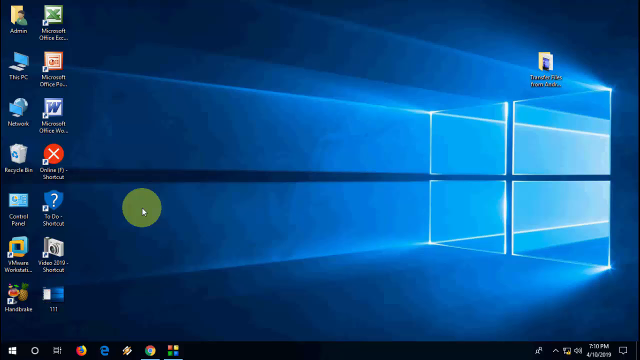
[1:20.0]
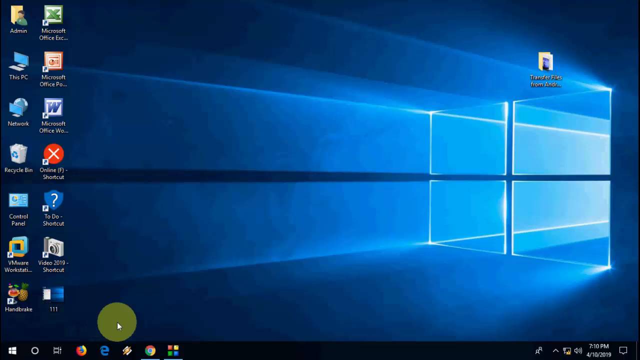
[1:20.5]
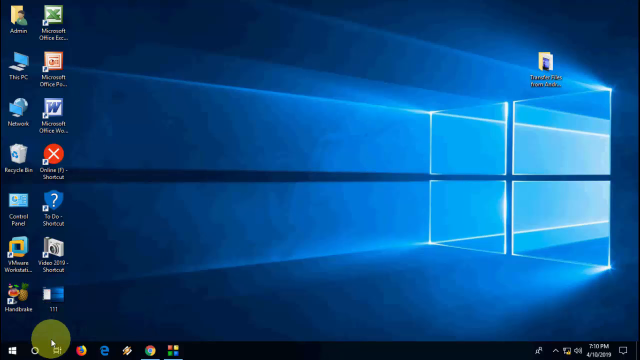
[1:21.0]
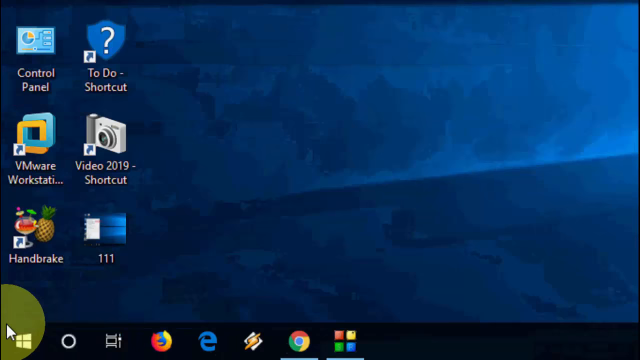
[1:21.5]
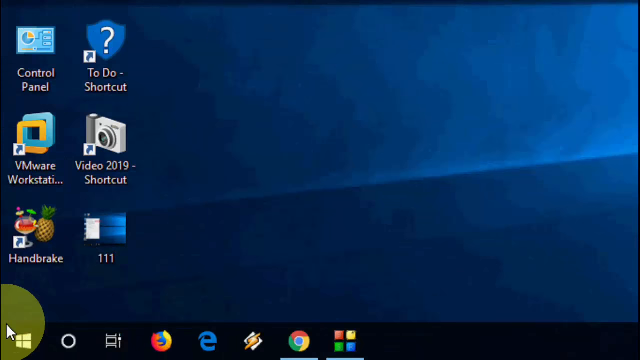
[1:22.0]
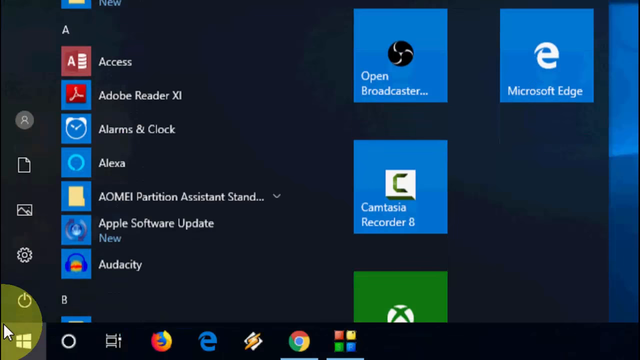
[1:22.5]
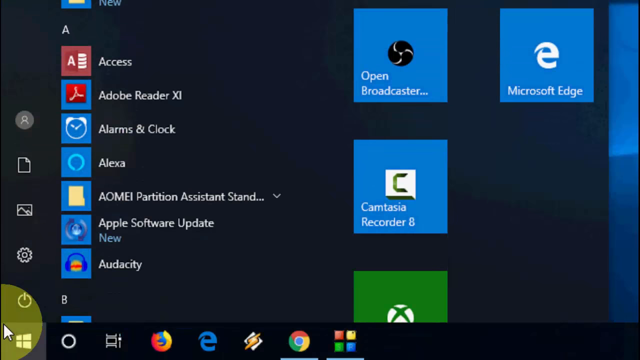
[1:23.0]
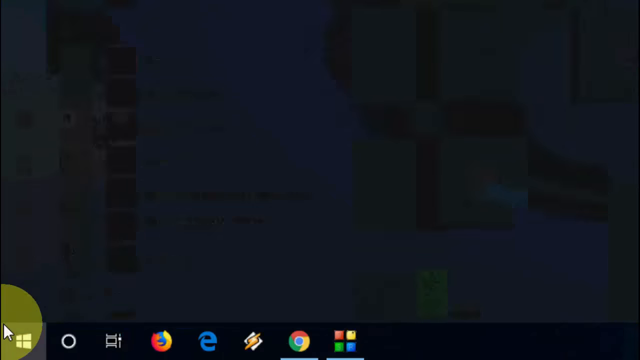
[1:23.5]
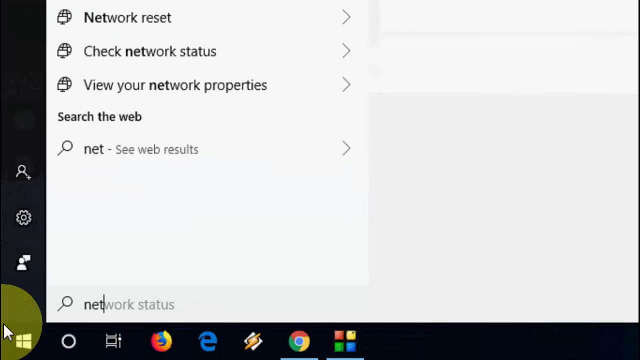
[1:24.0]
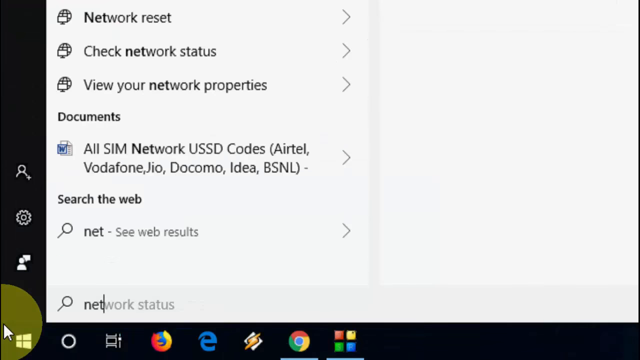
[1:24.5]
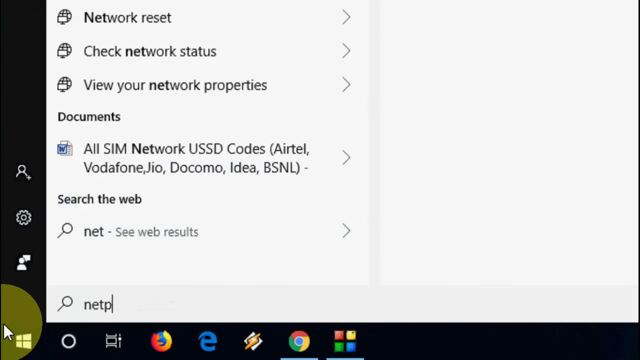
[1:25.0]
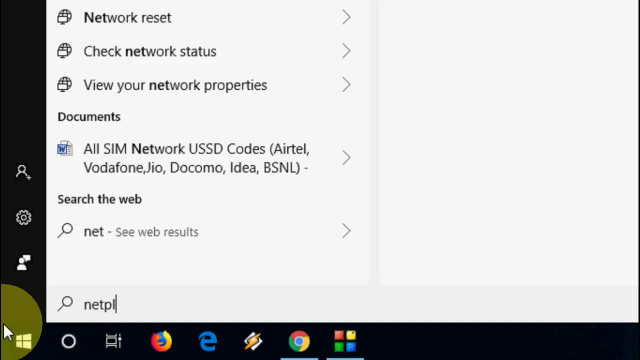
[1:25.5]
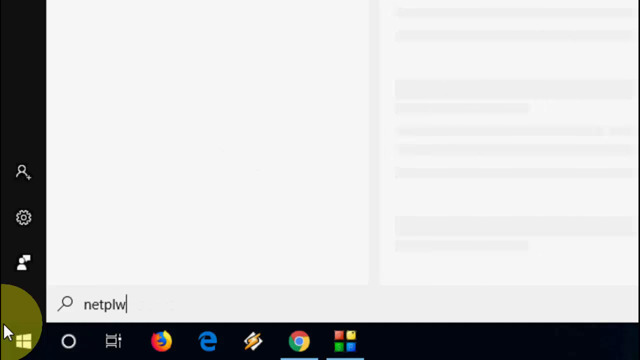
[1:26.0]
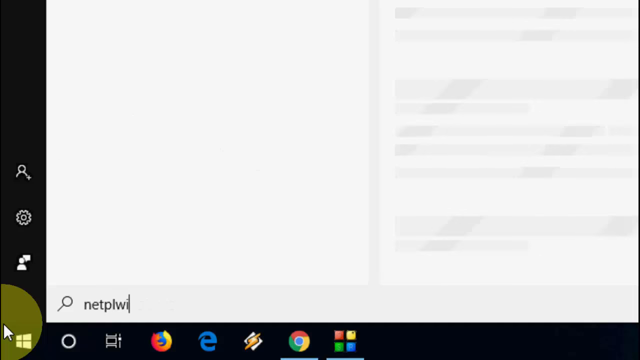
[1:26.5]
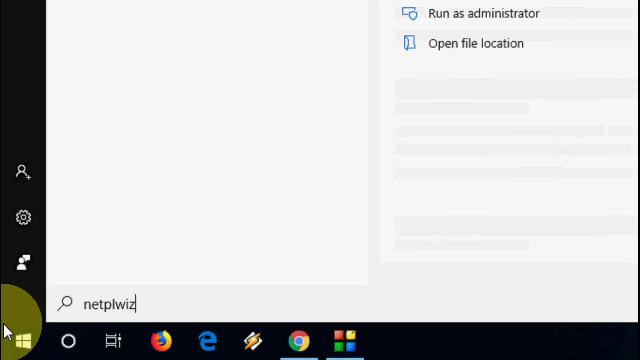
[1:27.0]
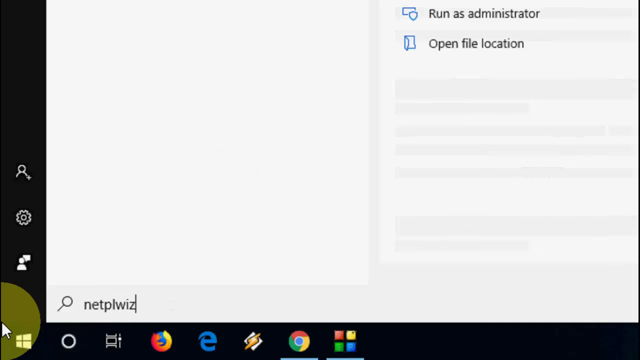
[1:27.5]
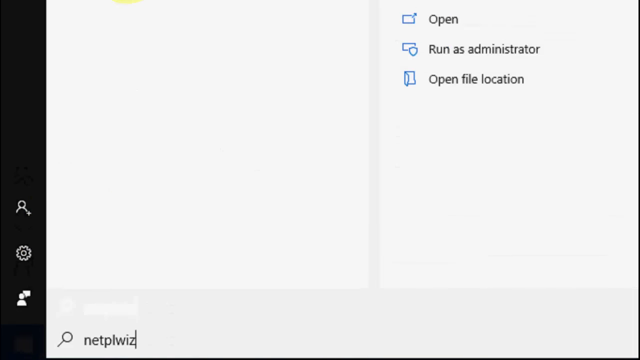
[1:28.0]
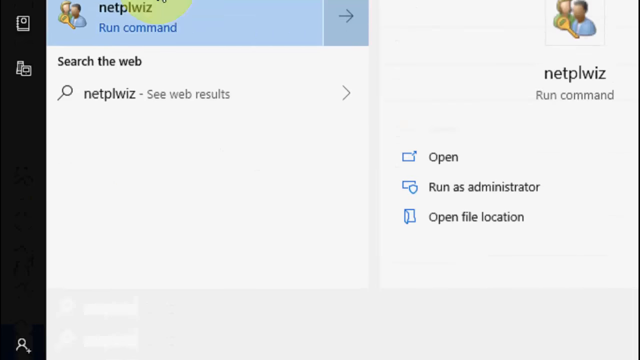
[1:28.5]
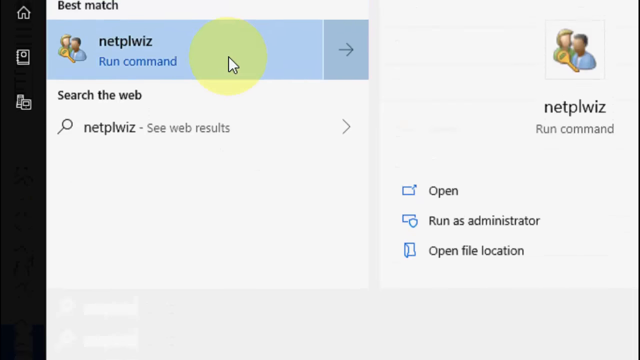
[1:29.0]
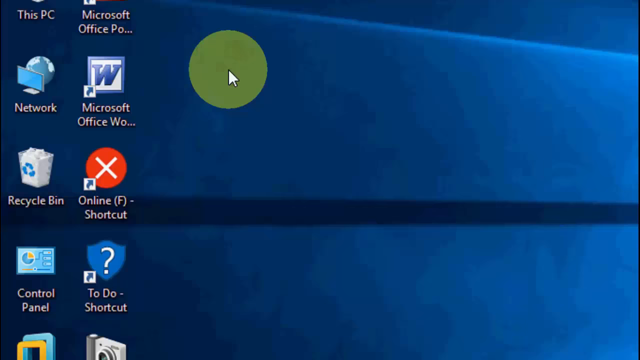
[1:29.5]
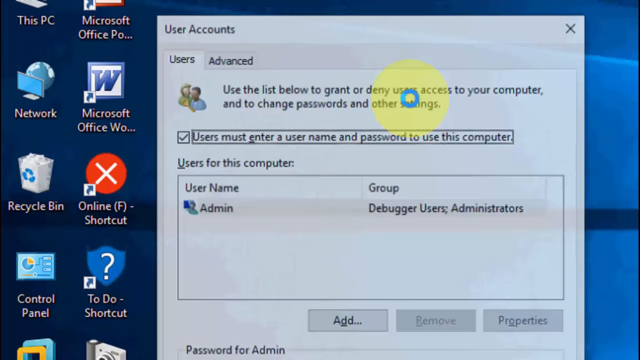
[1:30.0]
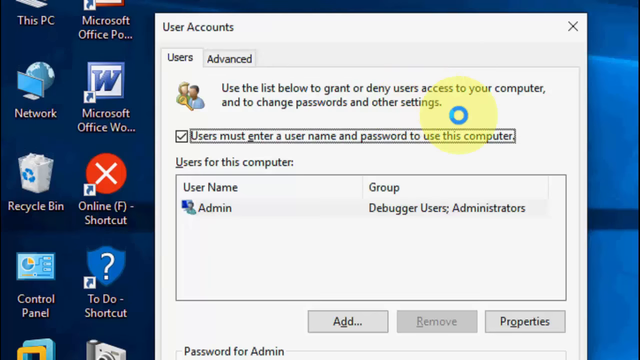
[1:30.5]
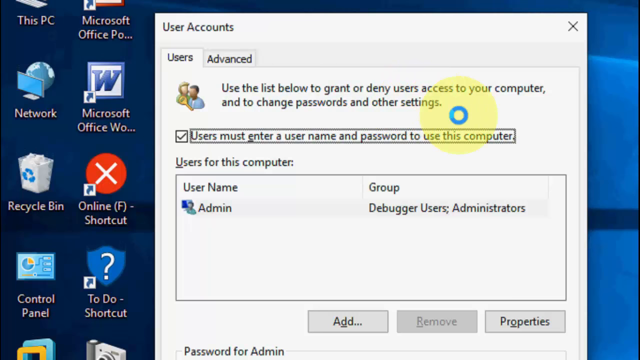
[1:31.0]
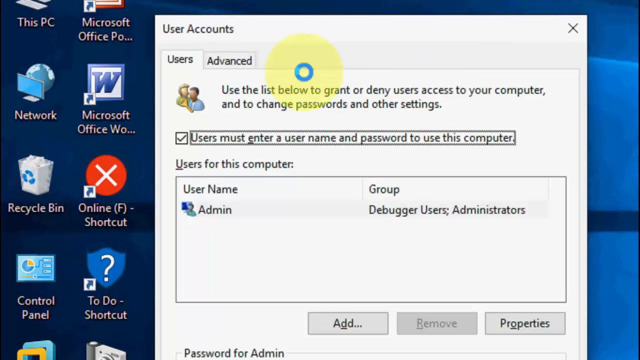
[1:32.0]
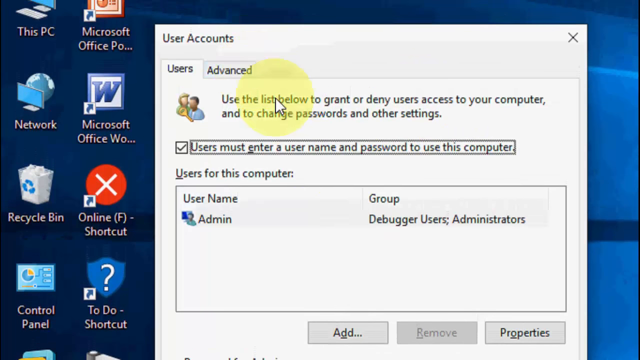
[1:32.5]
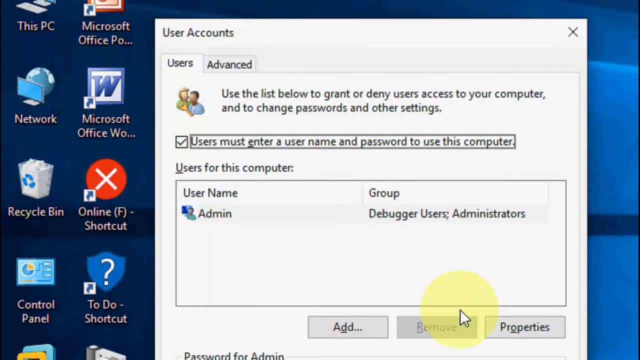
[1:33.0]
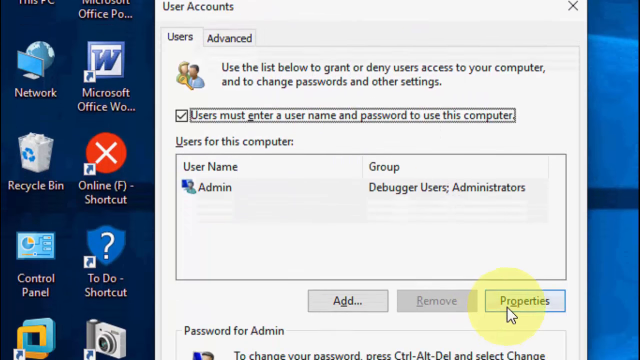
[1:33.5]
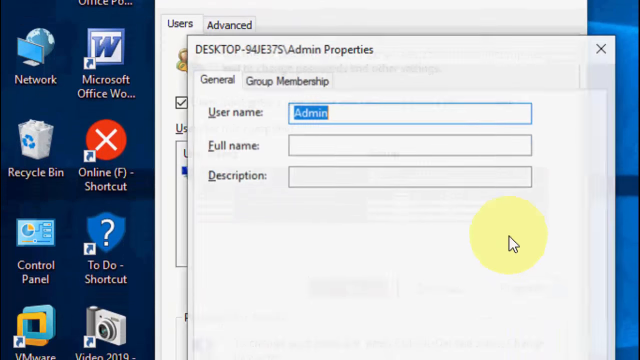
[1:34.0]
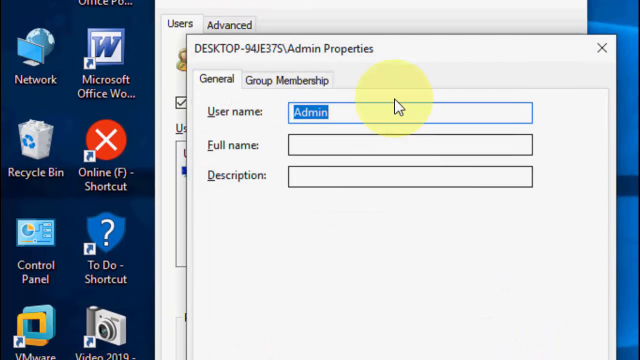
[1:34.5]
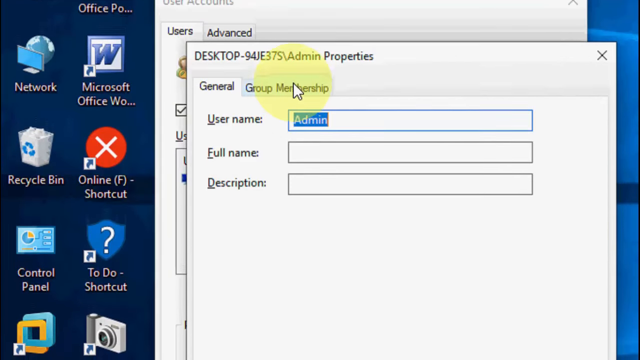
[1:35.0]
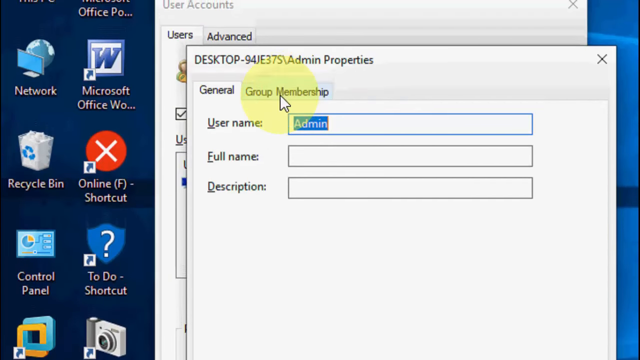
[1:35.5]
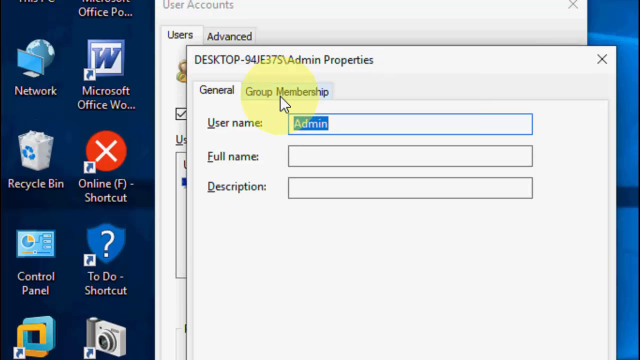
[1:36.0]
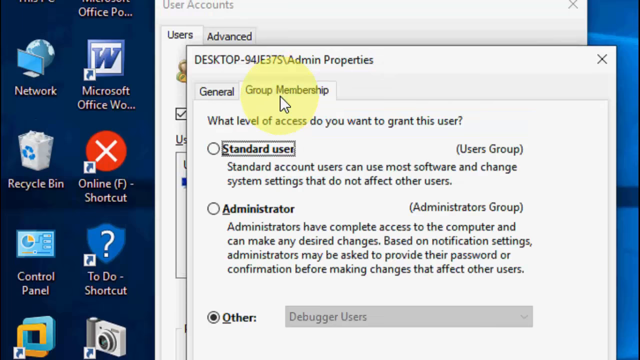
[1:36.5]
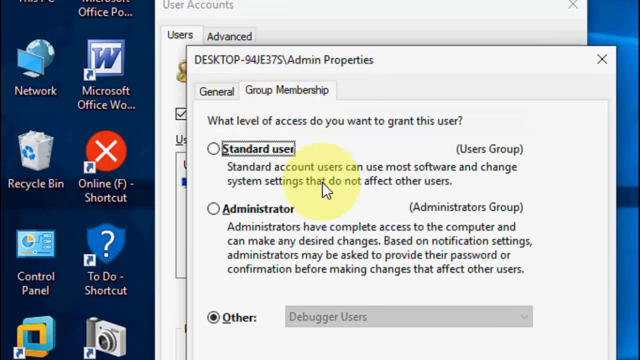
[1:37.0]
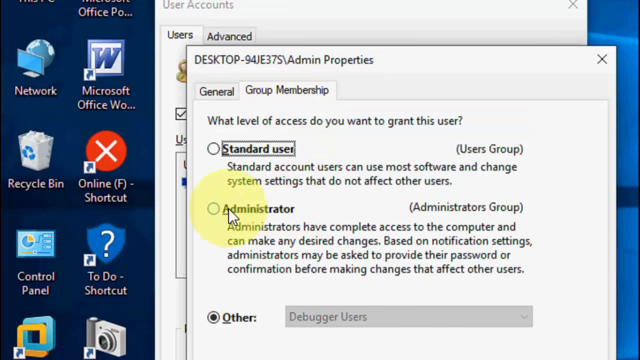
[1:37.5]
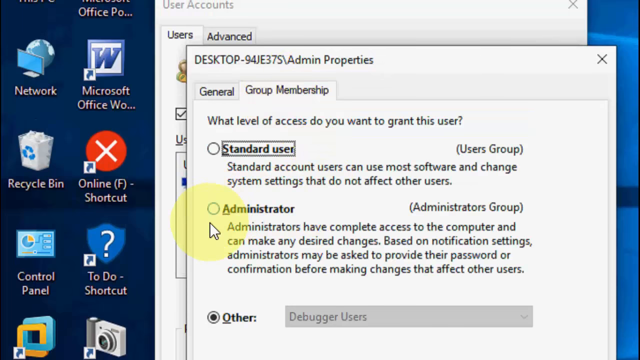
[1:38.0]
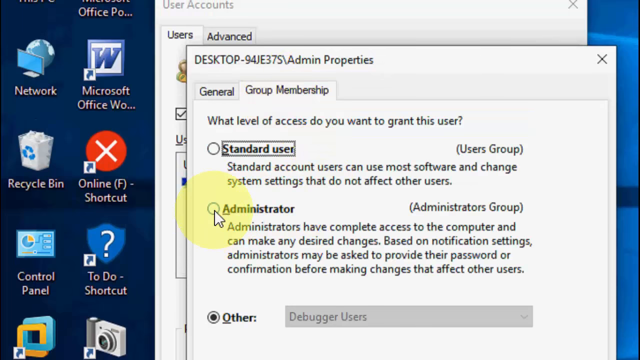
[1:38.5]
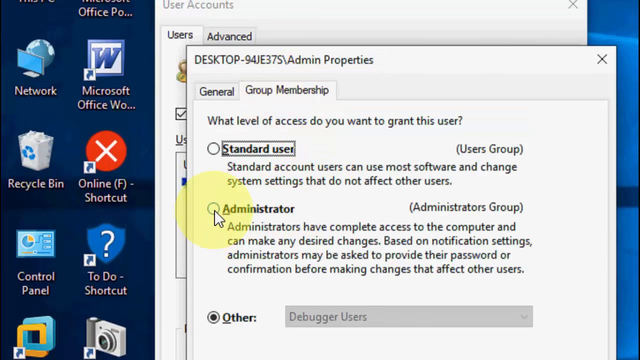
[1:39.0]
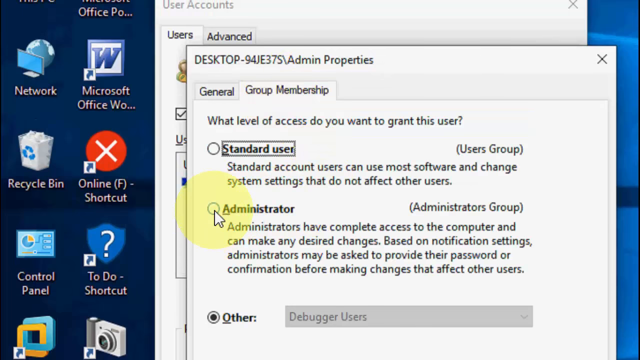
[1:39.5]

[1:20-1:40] The Windows screensaver is on a Windows PC, with 14 shortcuts on the desktop. A cursor has a very light, see-through circle around it that looks greenish, appearing green because it interacts with the blue, though it is actually yellow. The person moves the cursor down to the Windows logo at the bottom right of the toolbar, which brings up the access page and then leads to another page. A desktop admin properties pop-up box appears with tabs for general and group membership; the group membership tab is open, with selections for standard user, administrator and other. The highlighted cursor hovers over administrator, which appears to be clicked, and the video transitions back to the Windows screensaver and the desktop.